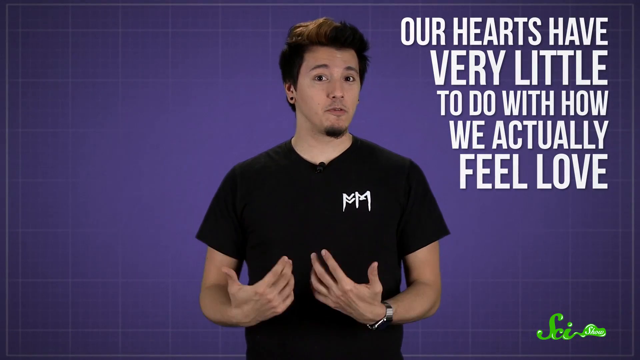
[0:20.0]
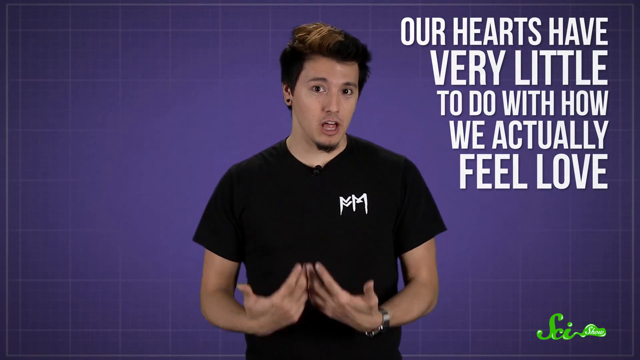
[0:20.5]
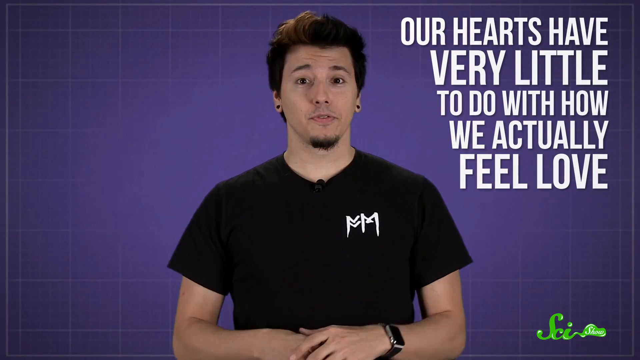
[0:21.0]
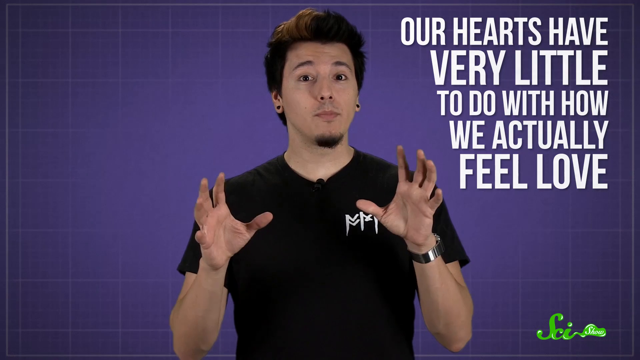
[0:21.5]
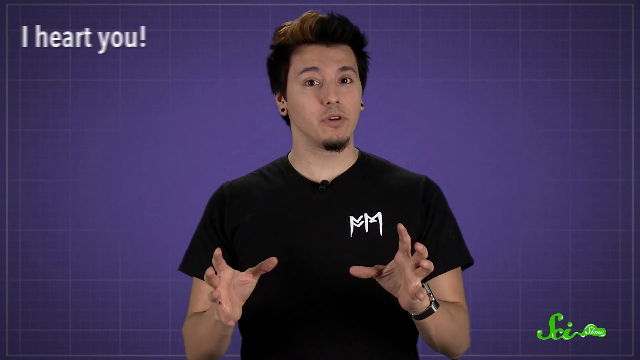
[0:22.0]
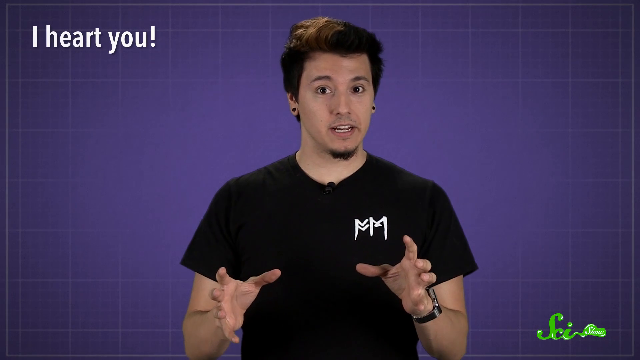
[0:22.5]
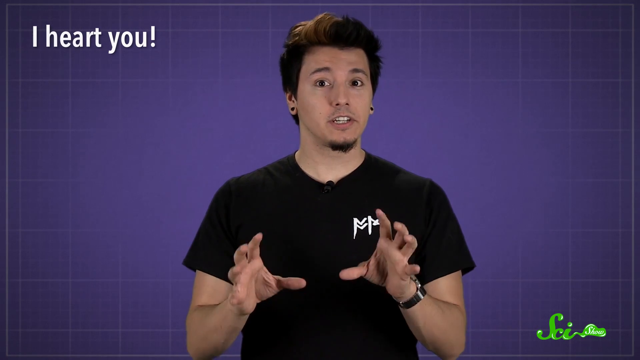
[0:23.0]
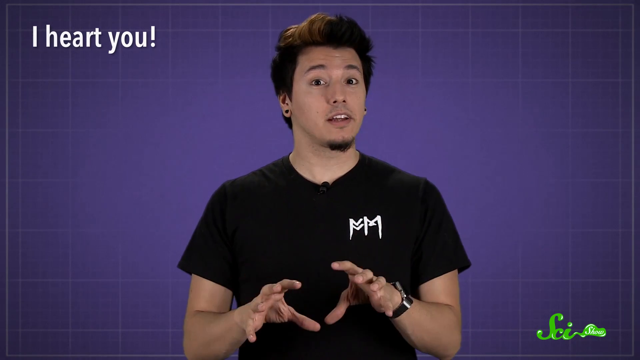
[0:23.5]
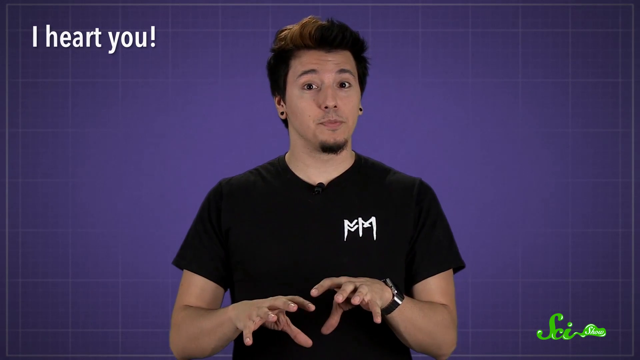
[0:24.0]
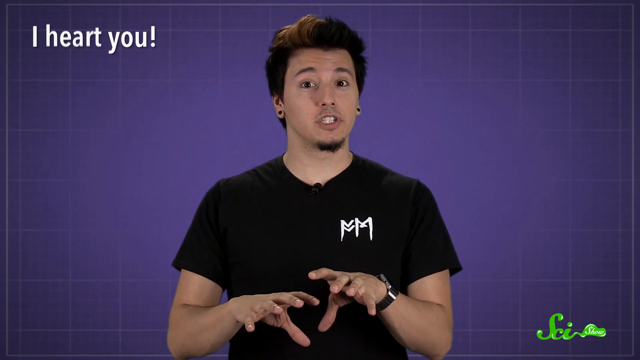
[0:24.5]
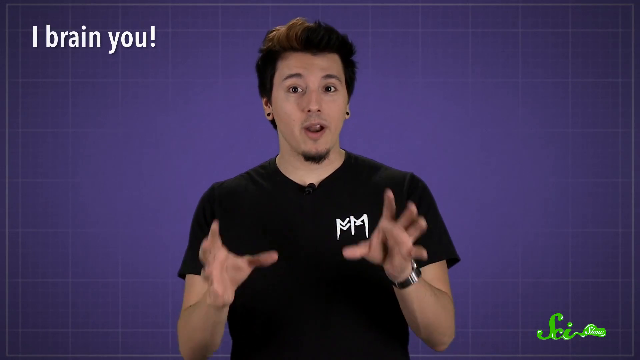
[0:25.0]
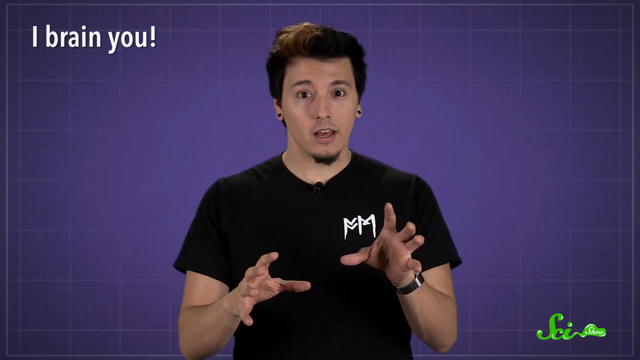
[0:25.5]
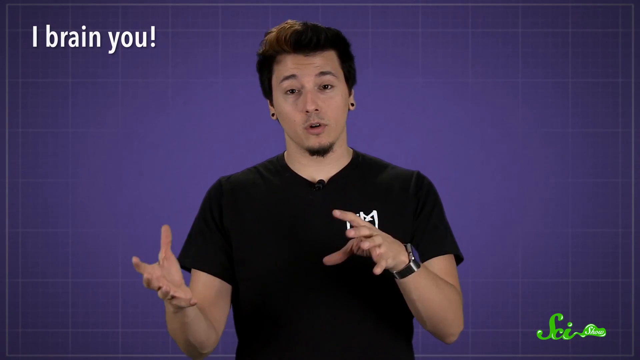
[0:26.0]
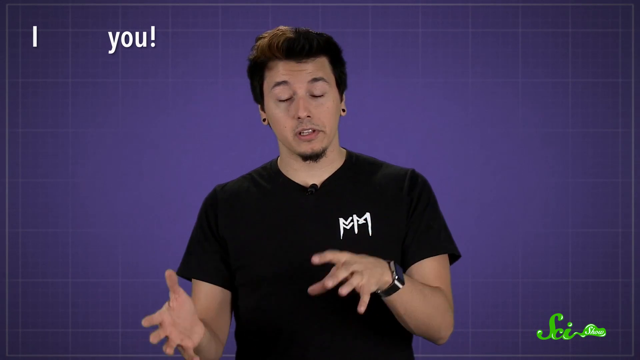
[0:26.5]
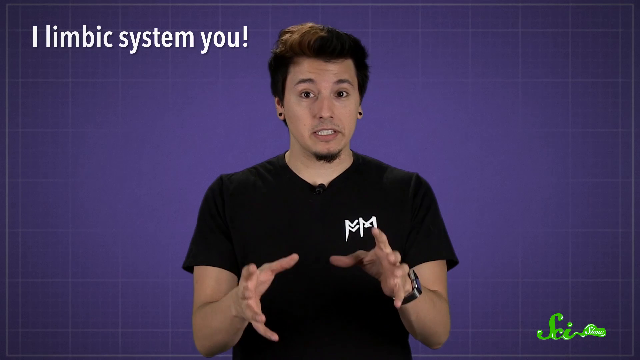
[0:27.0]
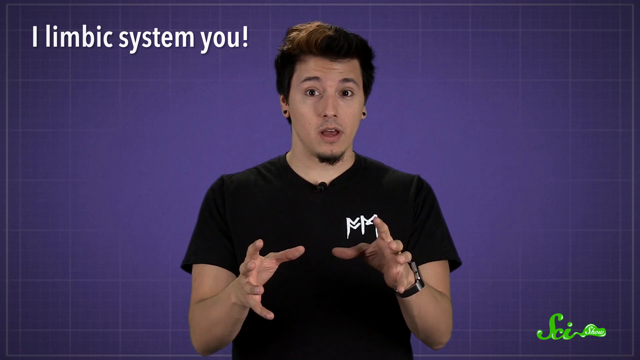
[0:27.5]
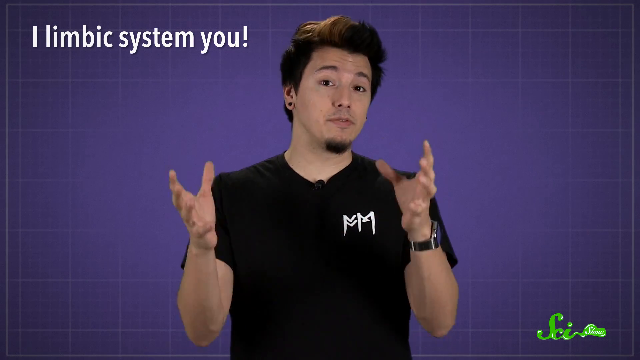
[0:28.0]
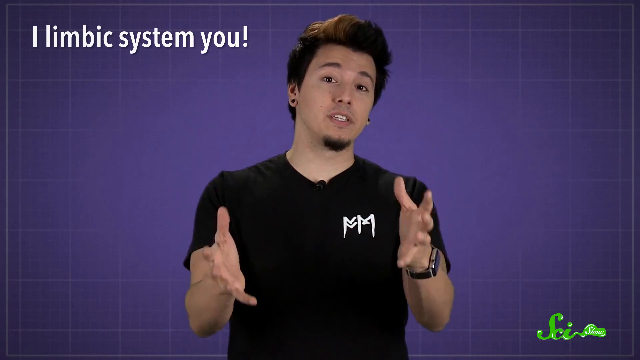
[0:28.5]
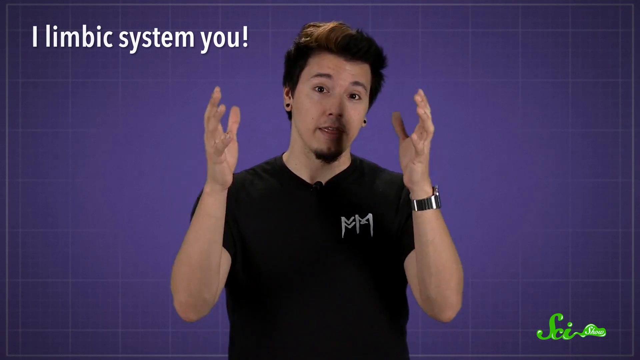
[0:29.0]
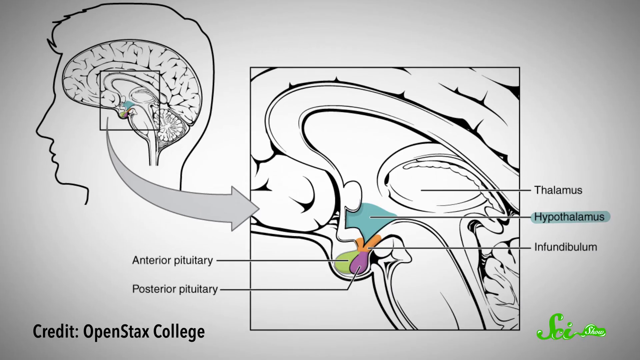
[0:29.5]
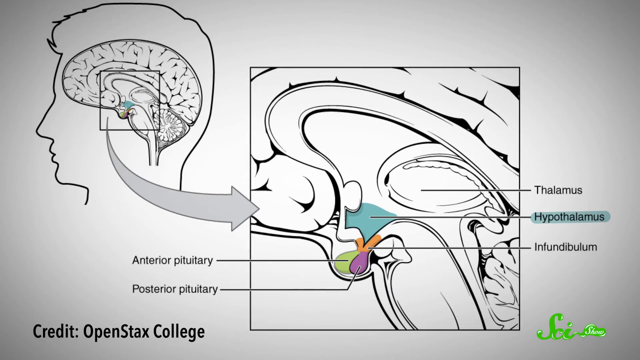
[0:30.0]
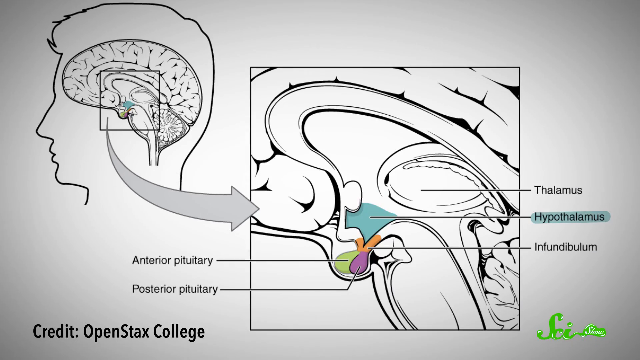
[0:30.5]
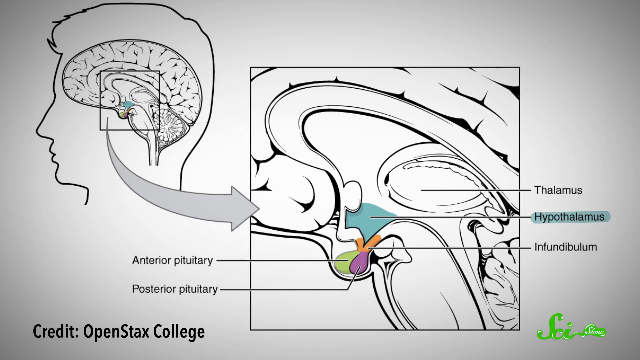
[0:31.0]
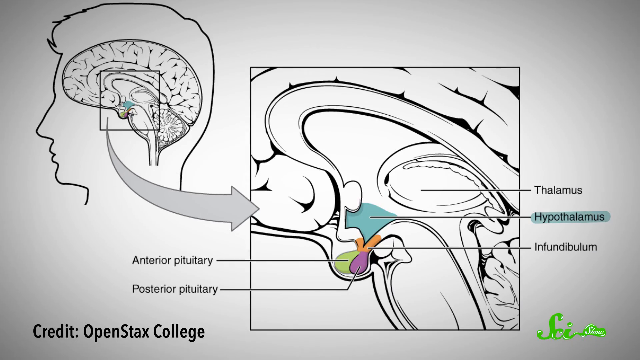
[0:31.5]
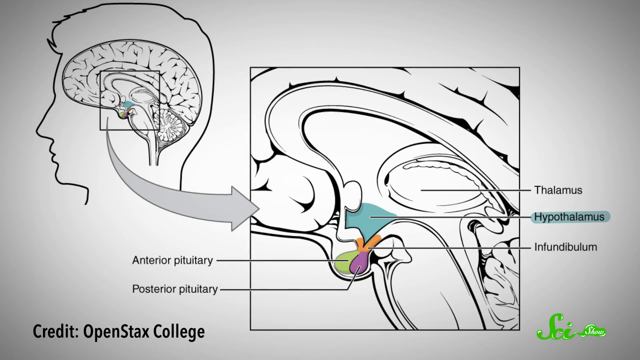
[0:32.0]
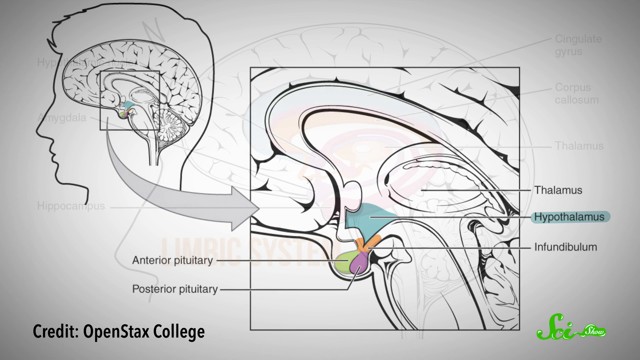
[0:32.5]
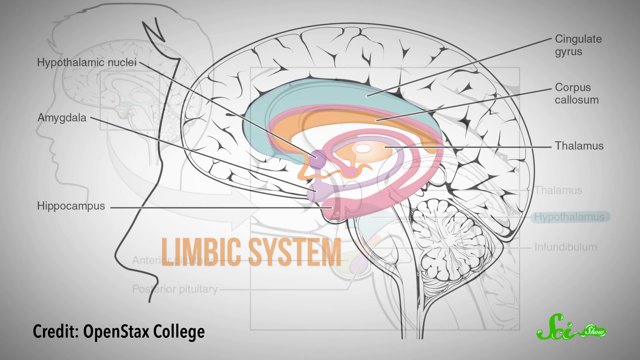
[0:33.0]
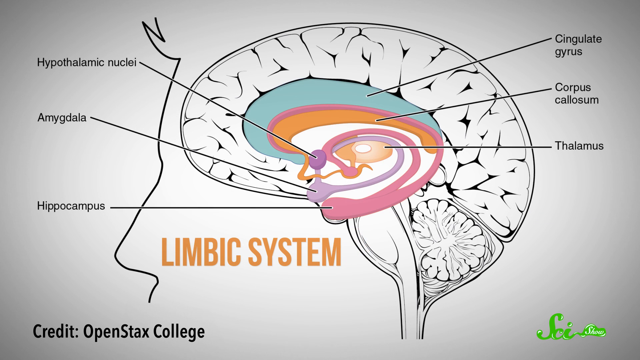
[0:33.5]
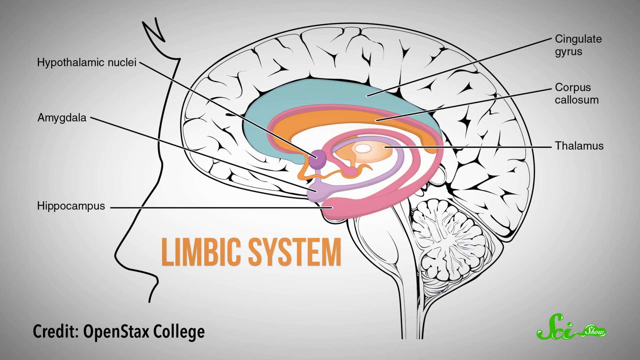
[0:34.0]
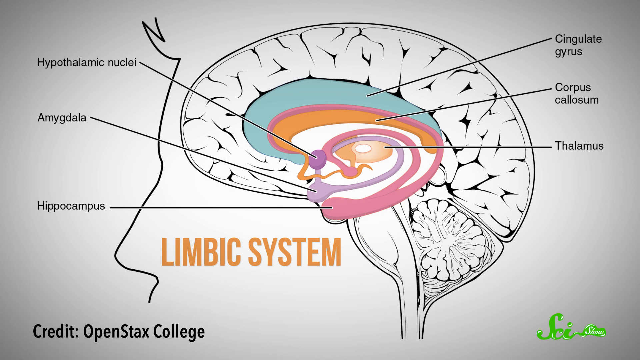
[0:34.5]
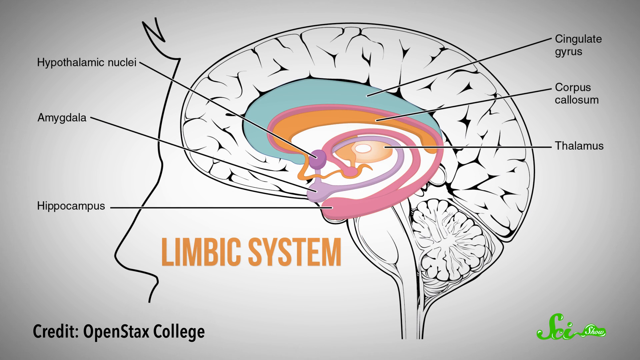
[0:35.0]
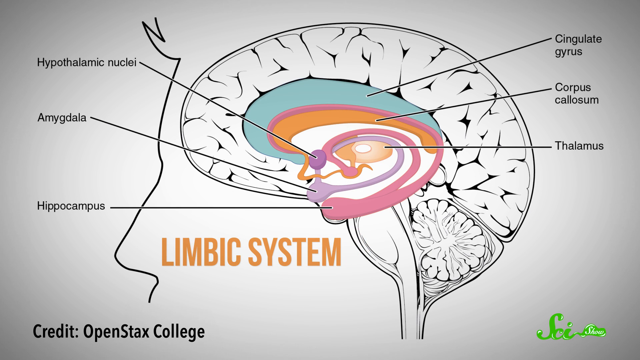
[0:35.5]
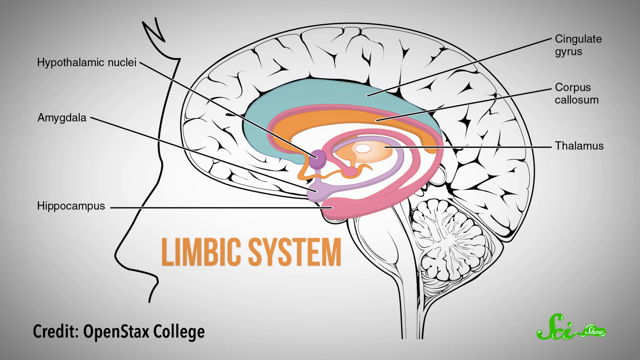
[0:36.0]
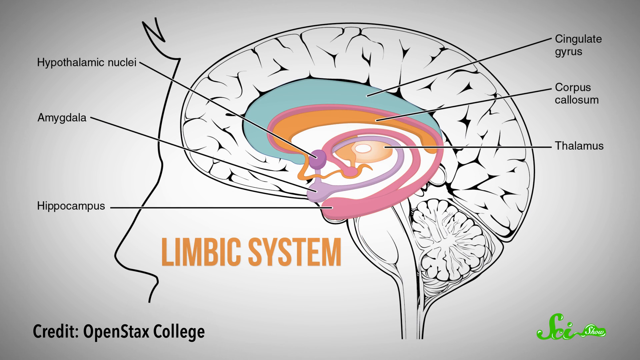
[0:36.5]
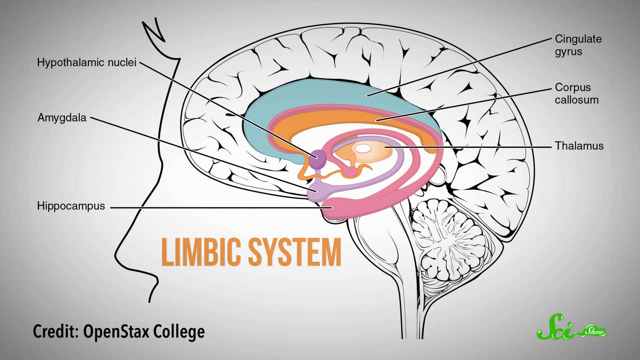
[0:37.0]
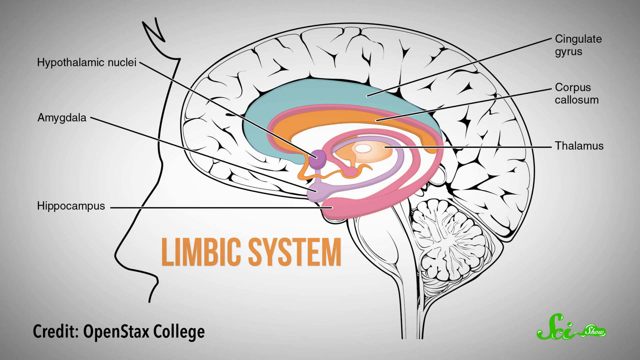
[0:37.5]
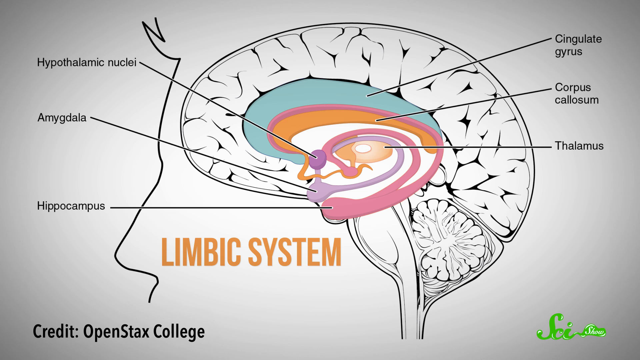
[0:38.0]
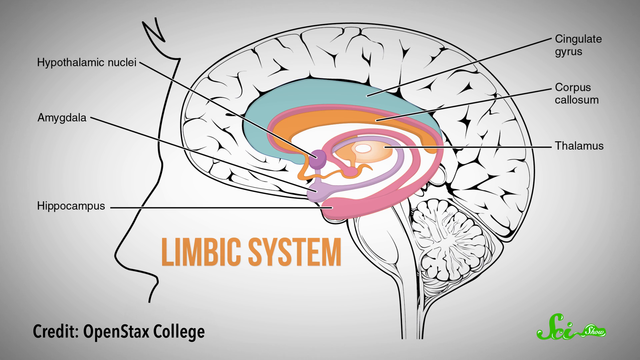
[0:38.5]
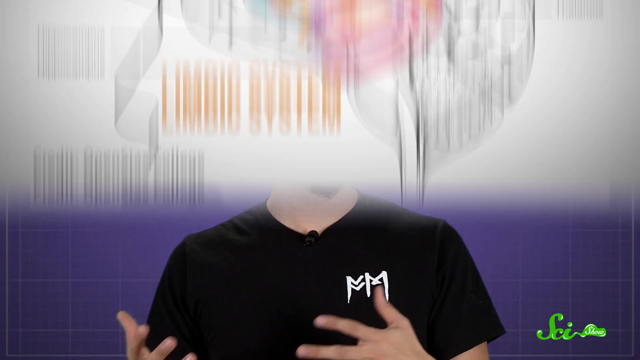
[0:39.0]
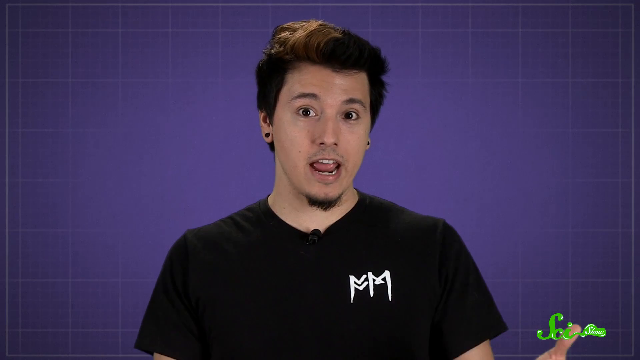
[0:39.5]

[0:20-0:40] A young man wears a black T-shirt with a white capital M written twice on the chest. He has a small goatee and thick, dark hair with brown highlights in the dyed parting, and he is standing against a purple background. In the upper right corner, white text reads "our hearts have very little to do with how we actually feel love." As he speaks and gestures, the text slides off the screen to the right in an animated transition. Another text slides in from the upper left corner, reading "I heart you." The young man continues speaking and gesturing with his hands. The text on the left slides upward and disappears, and another text slides in from the left reading "I brain you." That disappears and is replaced by text reading "I limbic system you." The young man continues to speak, gesturing with his hands. Then a drawn illustration of a human head seen from the side appears; no features are shown, only the brain. An arrow points from a section of the brain to a larger drawing that illustrates that section in a larger proportion, with labels including anterior pituitary, posterior pituitary and hypothalamus. Next comes a closer side view of the brain illustration with more labels, this time labeled as the limbic system, which stays on screen as the segment ends.